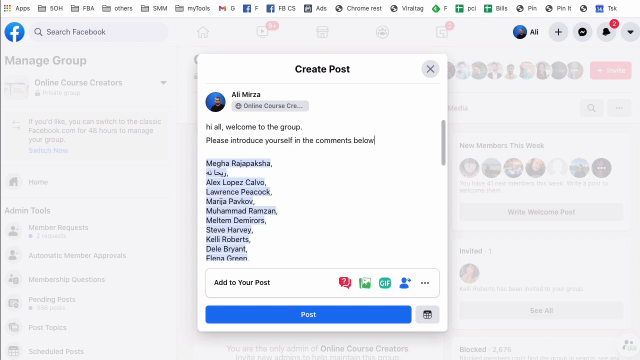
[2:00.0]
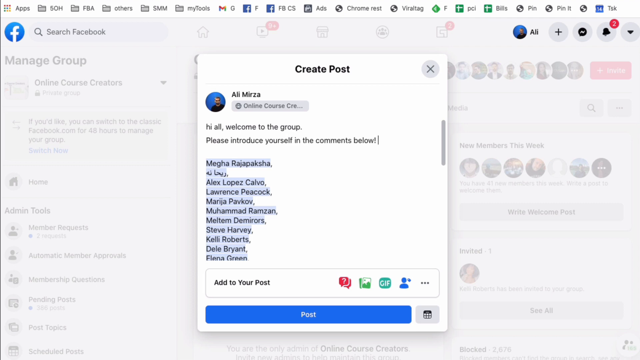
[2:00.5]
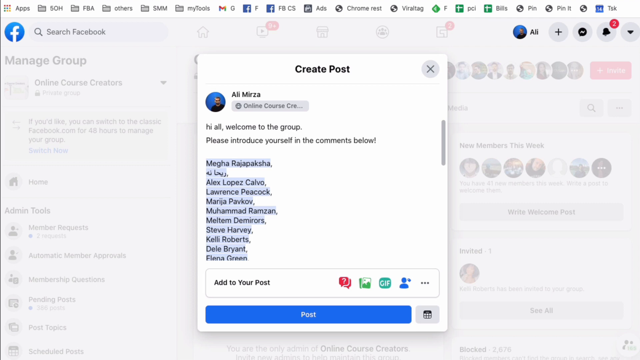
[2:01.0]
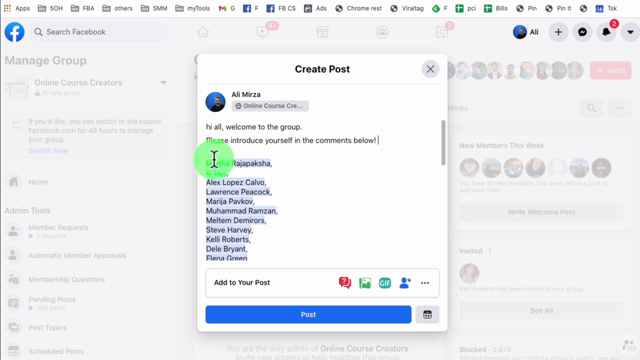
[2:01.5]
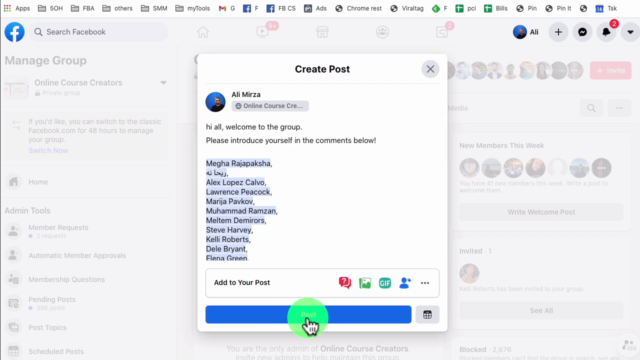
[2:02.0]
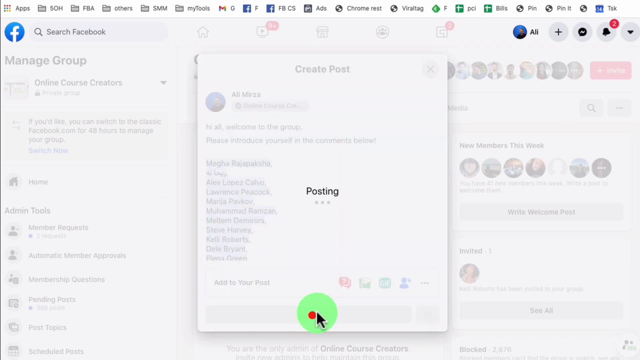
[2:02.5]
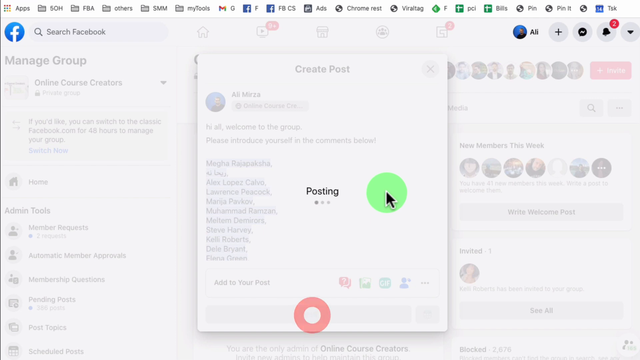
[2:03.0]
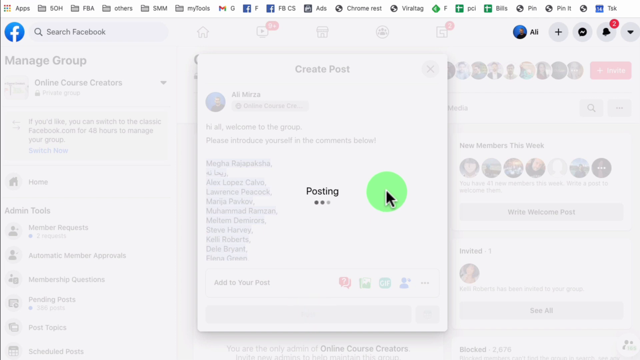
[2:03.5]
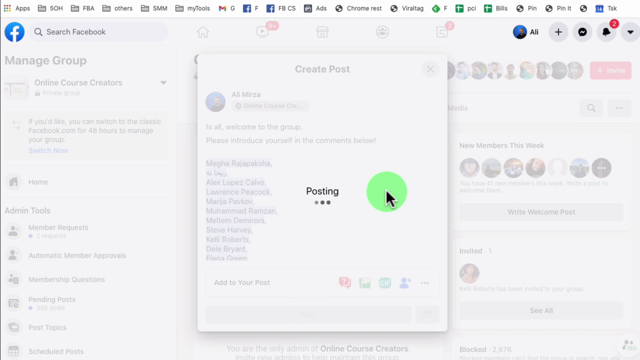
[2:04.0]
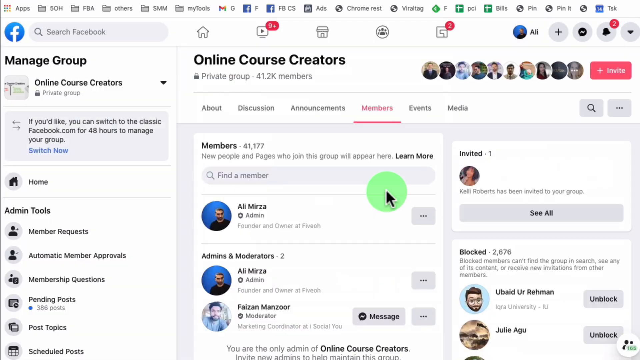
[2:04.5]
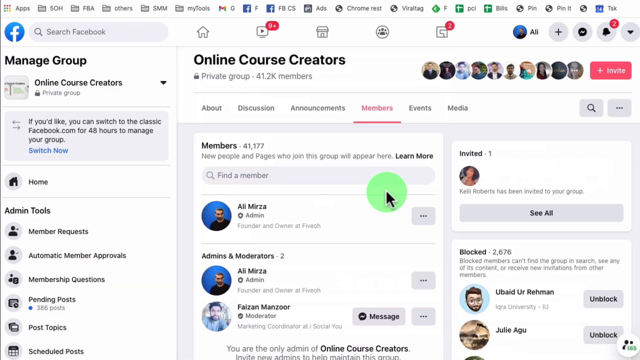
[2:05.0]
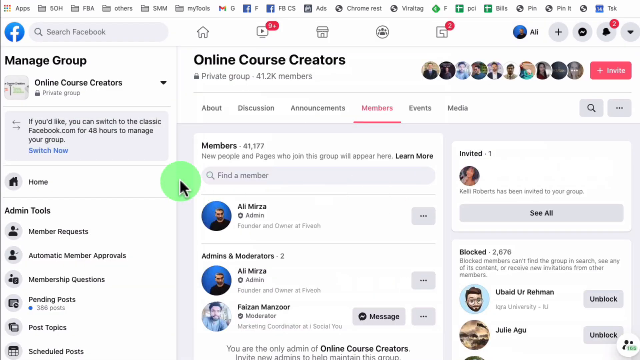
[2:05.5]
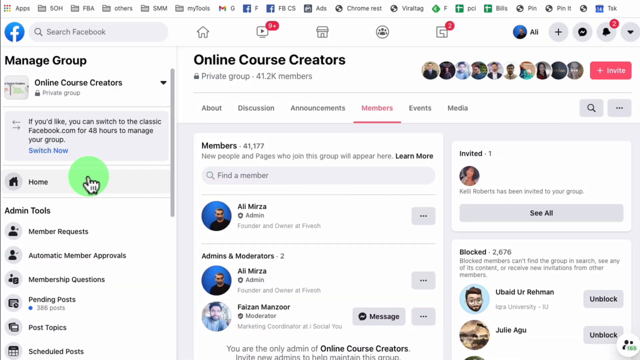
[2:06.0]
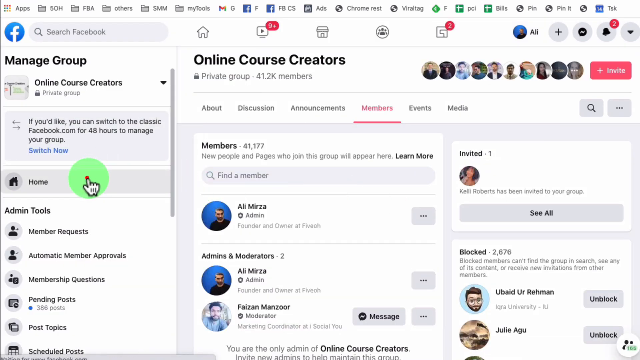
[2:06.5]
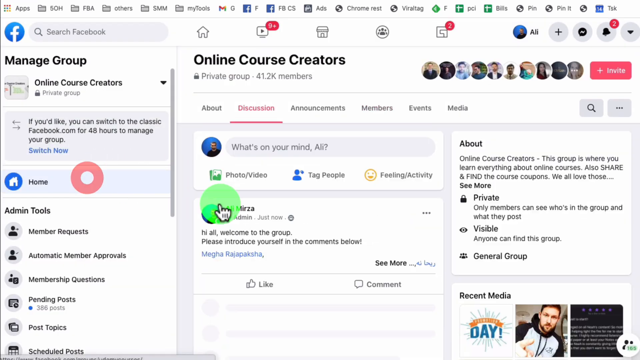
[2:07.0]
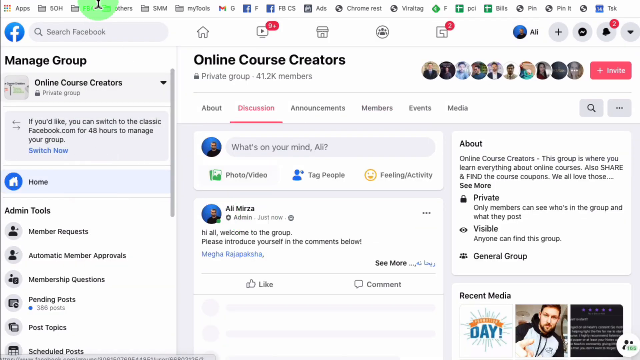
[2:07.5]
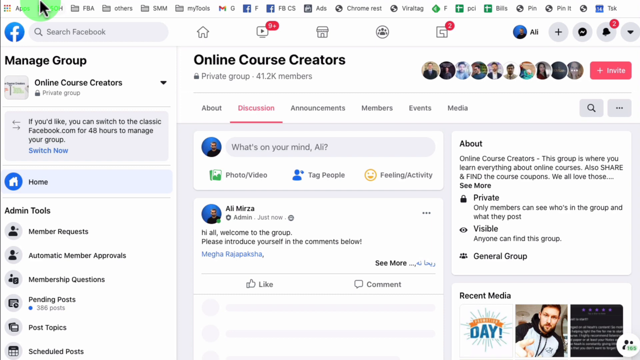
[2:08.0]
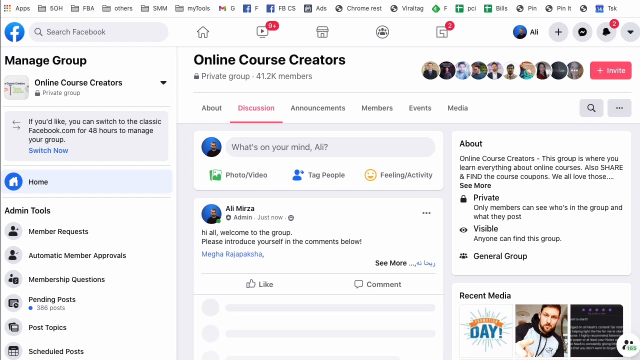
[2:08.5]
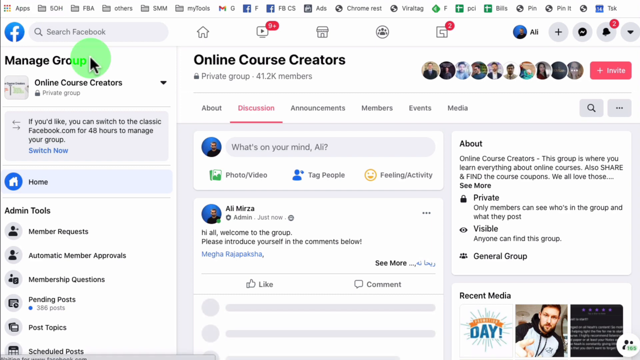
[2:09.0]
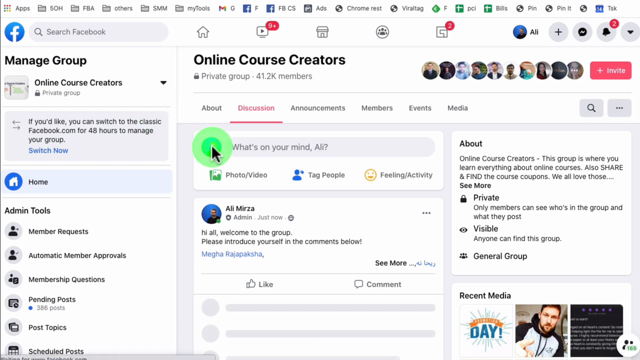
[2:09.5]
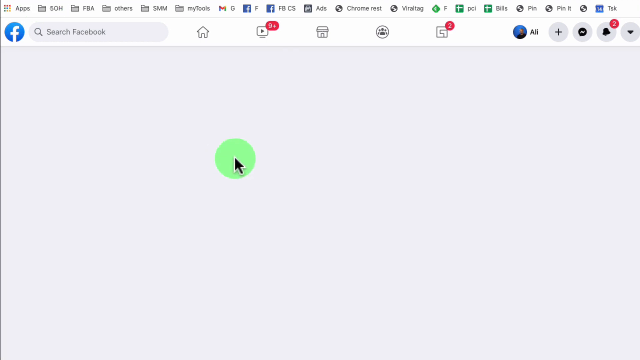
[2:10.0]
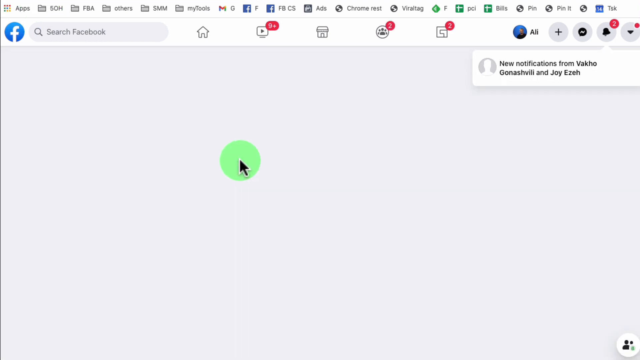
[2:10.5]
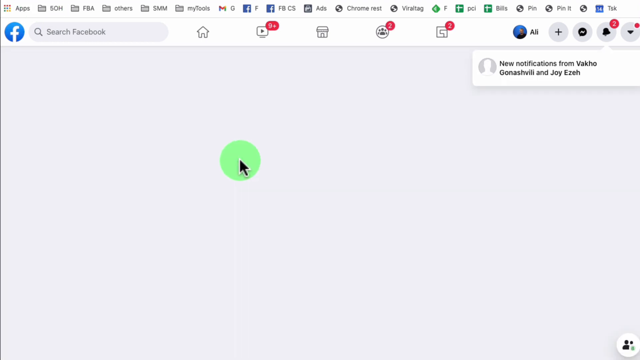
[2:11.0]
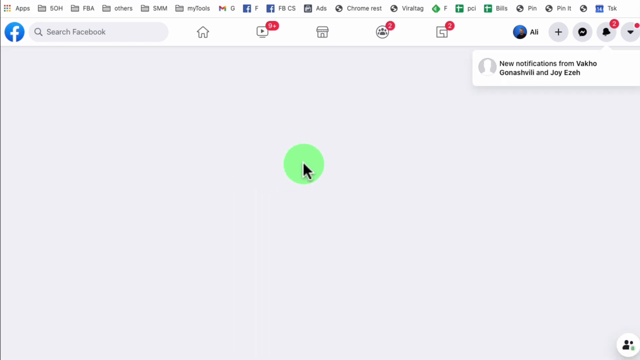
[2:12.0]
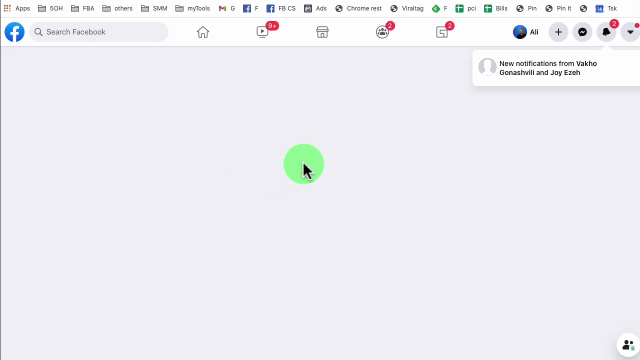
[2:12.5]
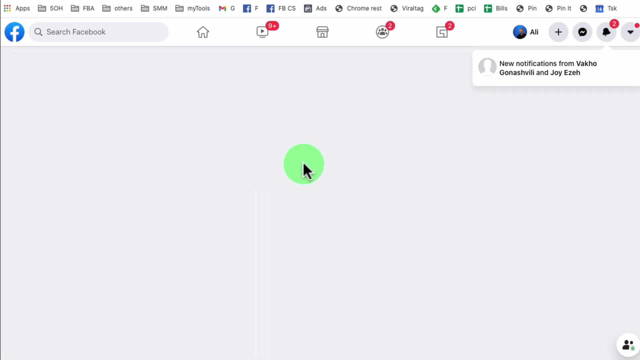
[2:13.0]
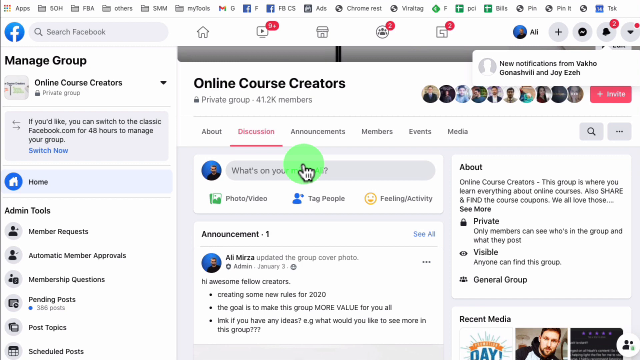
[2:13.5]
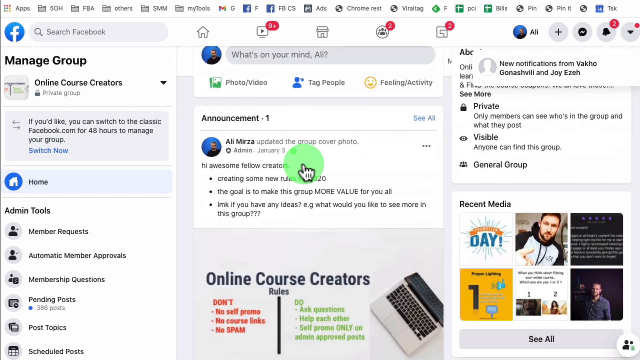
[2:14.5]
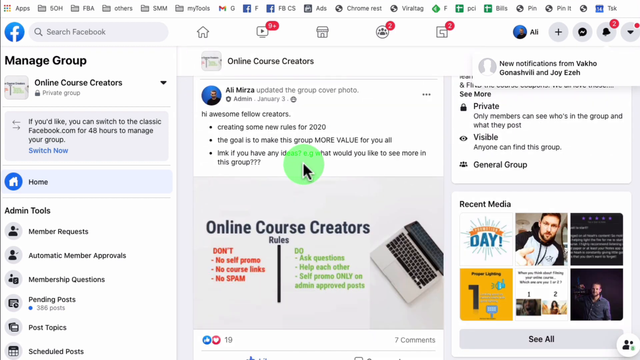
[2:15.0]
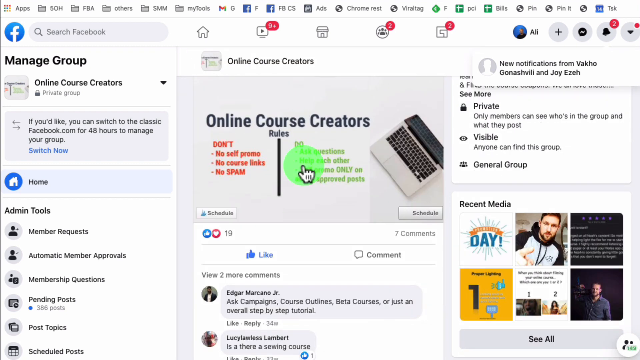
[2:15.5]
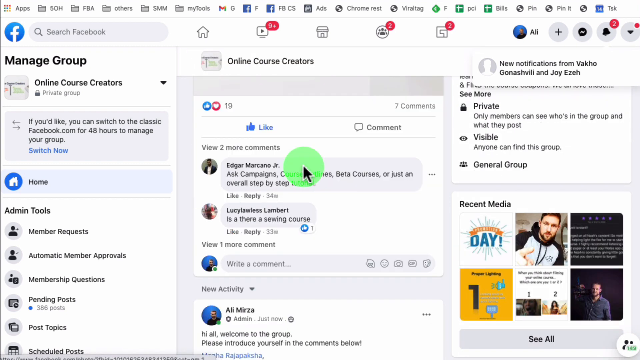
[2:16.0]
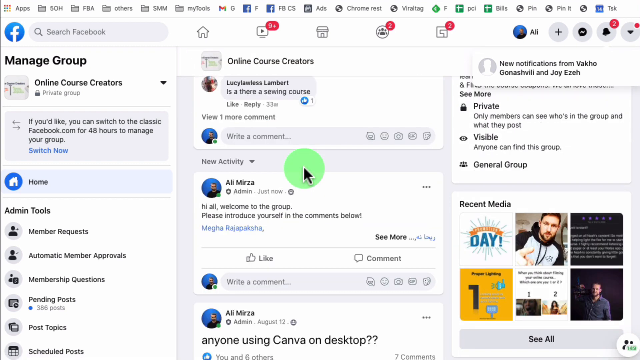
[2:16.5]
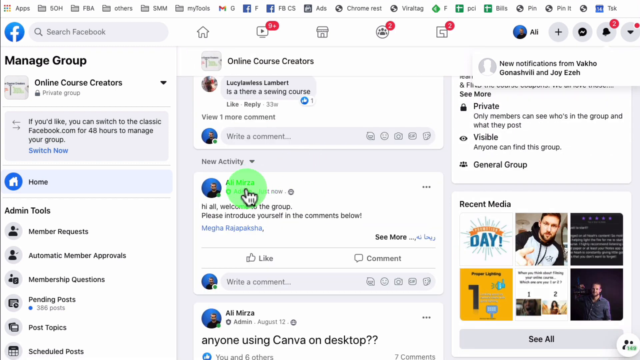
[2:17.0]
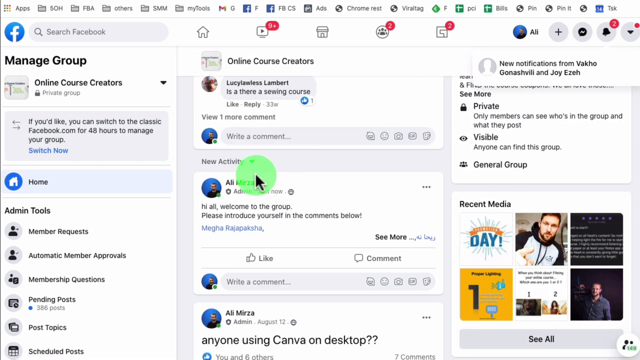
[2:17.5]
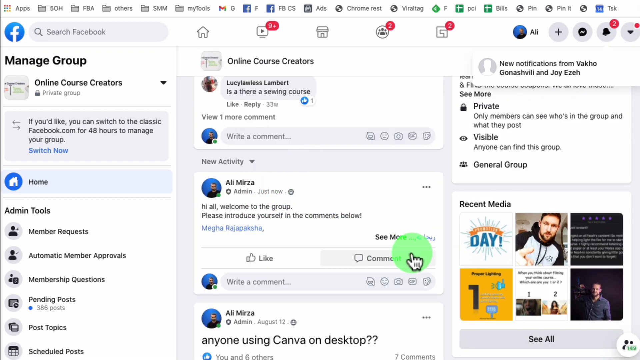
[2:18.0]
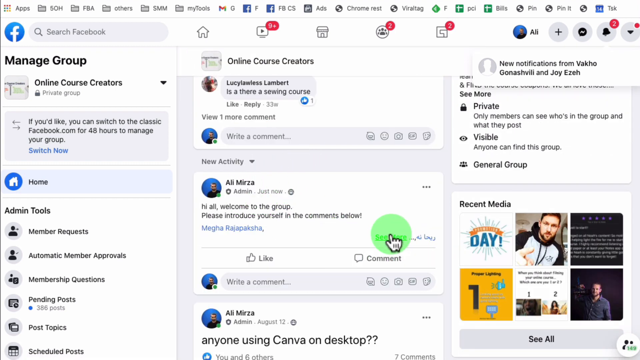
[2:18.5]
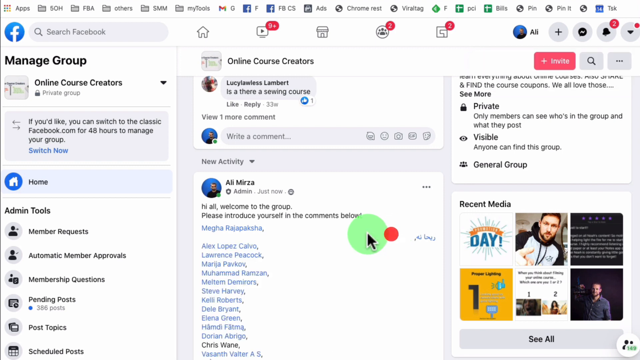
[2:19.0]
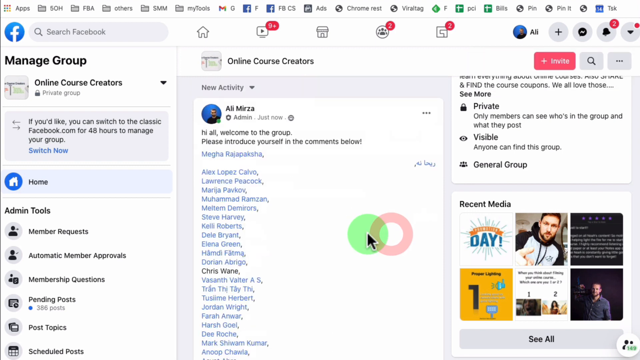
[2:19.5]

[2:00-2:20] The post has been created and all the new members have been tagged. A list shows the number of people tagged in the post. The people on the right side have just joined the group. The mouse hovers over the list of tagged people, and a blue send button is clicked.